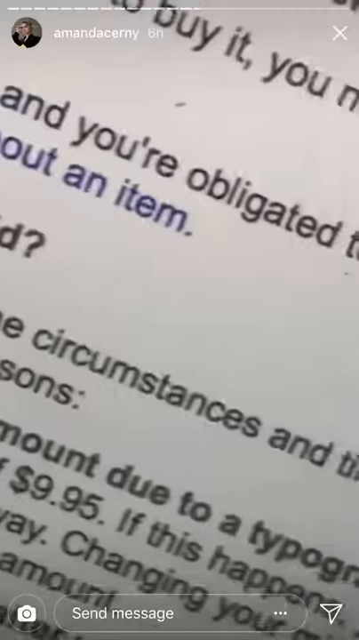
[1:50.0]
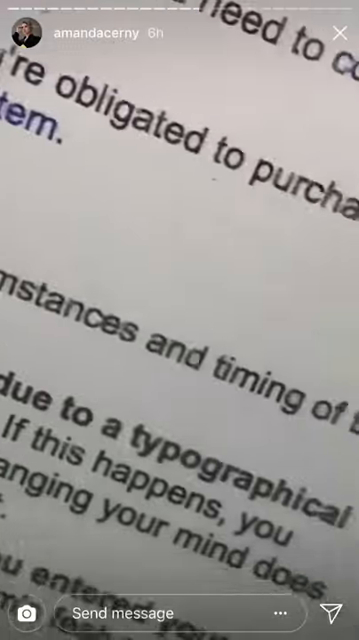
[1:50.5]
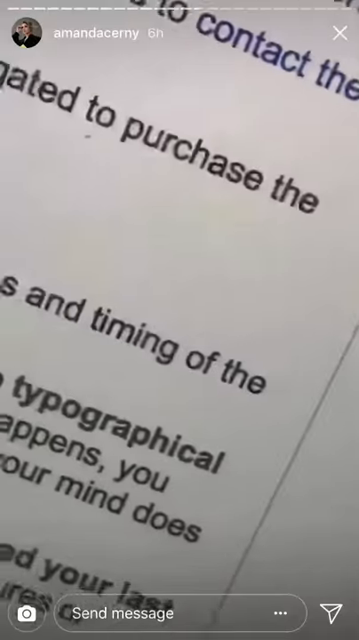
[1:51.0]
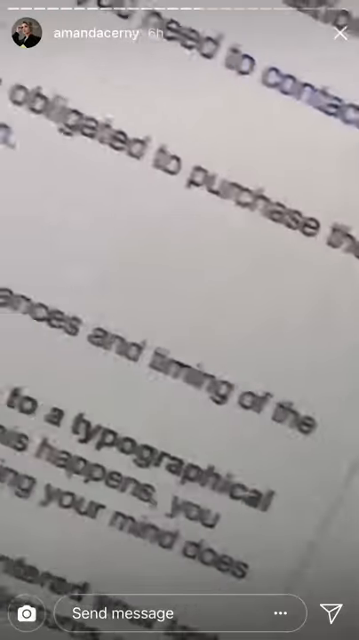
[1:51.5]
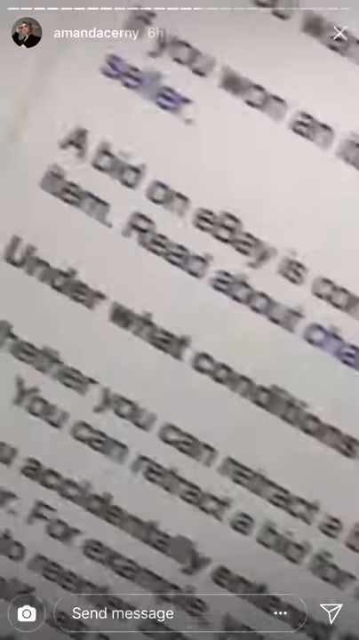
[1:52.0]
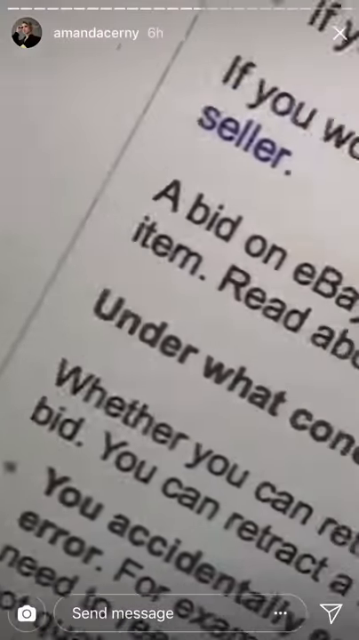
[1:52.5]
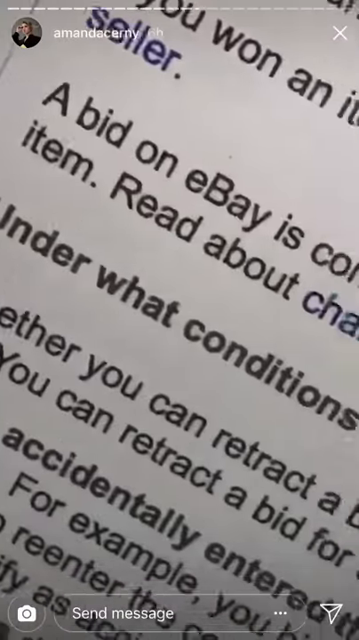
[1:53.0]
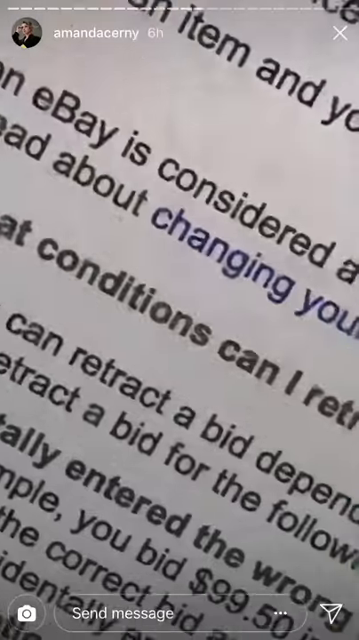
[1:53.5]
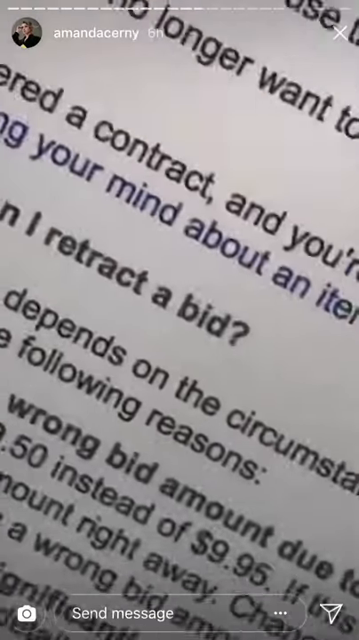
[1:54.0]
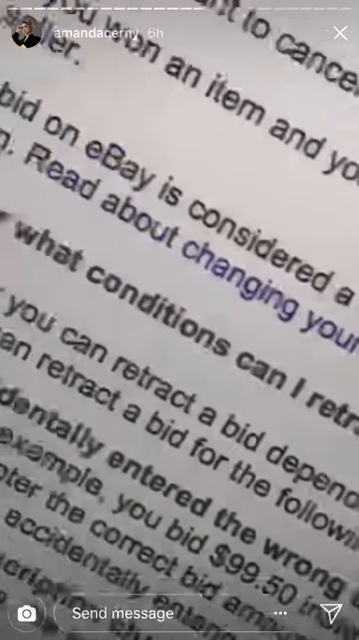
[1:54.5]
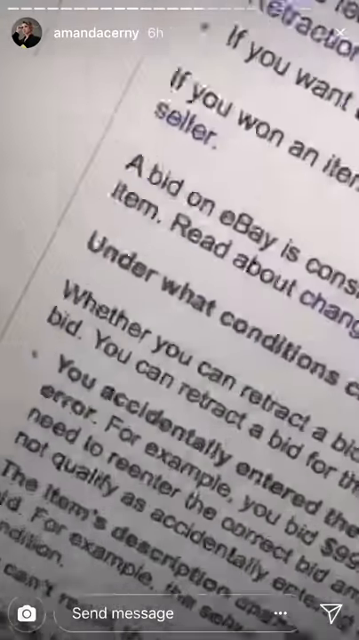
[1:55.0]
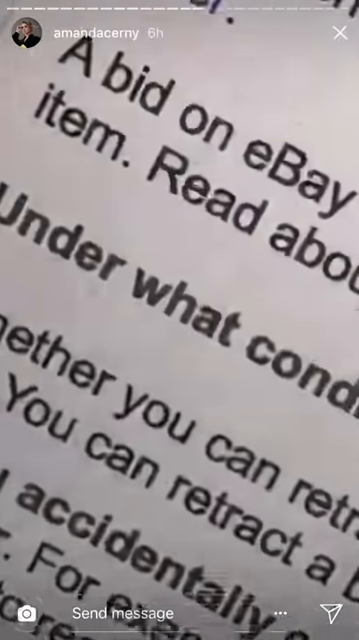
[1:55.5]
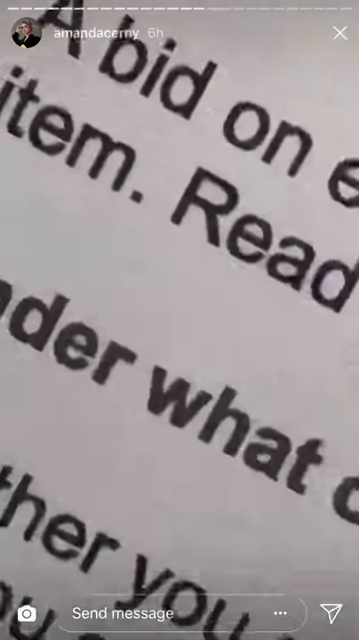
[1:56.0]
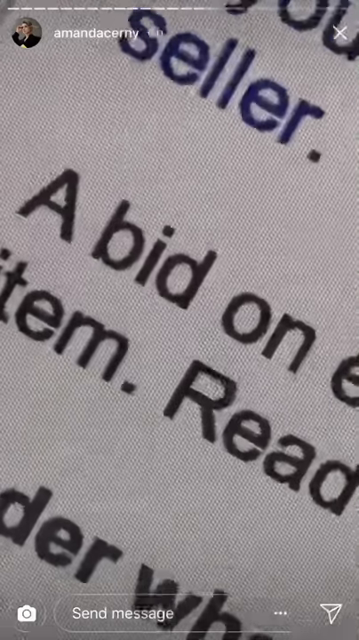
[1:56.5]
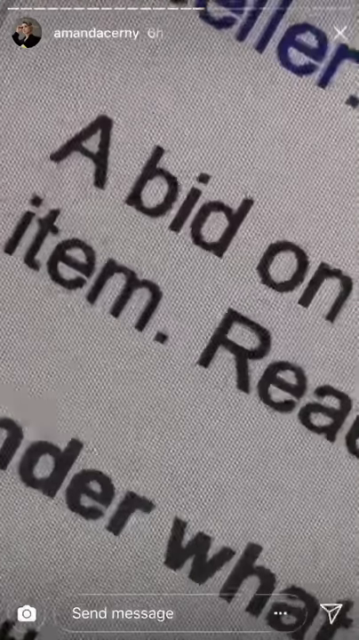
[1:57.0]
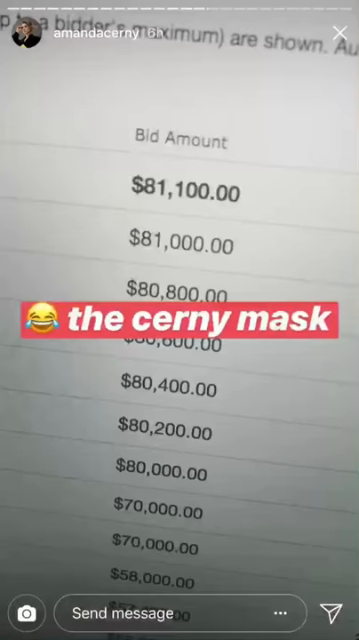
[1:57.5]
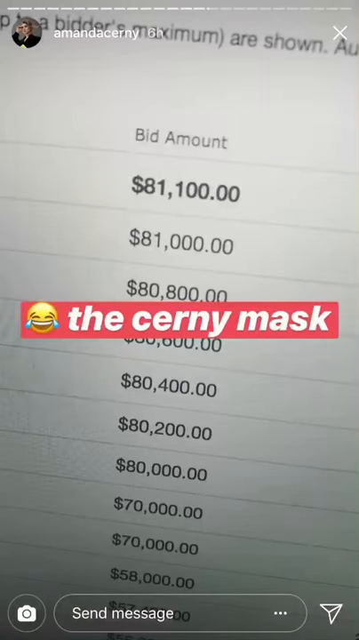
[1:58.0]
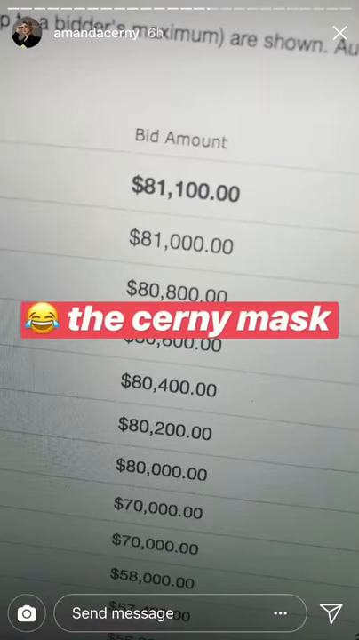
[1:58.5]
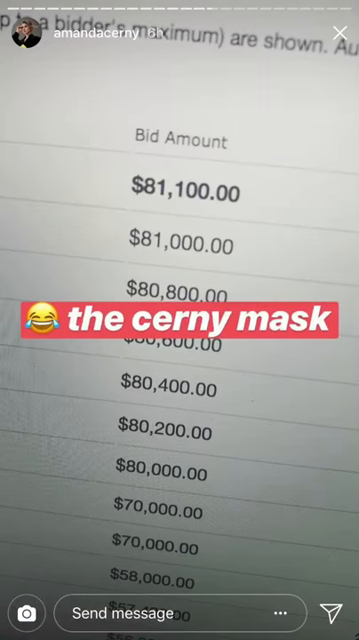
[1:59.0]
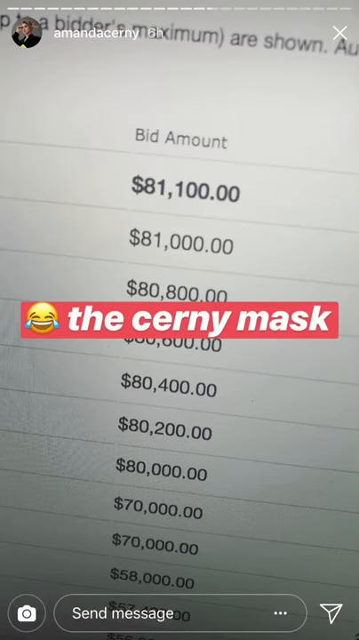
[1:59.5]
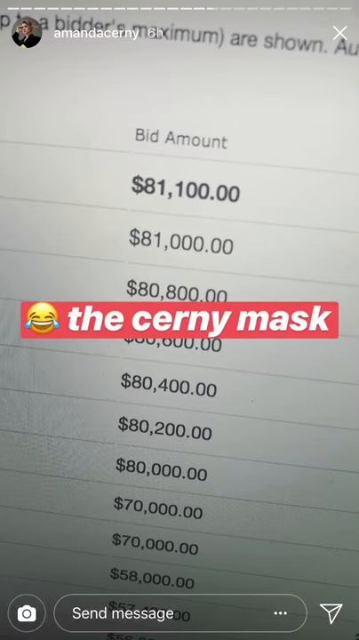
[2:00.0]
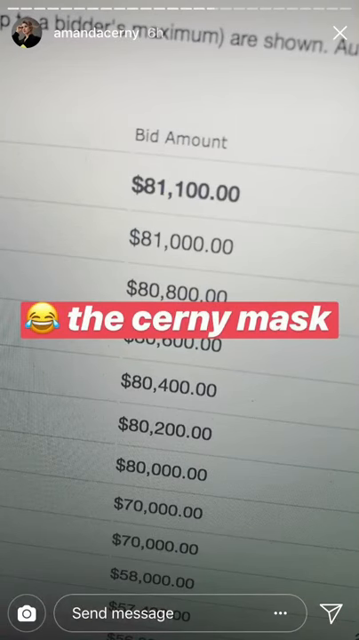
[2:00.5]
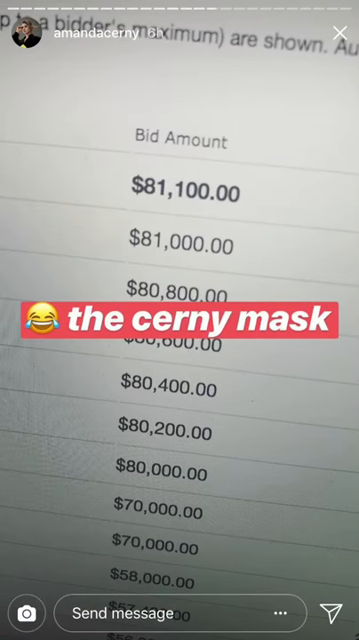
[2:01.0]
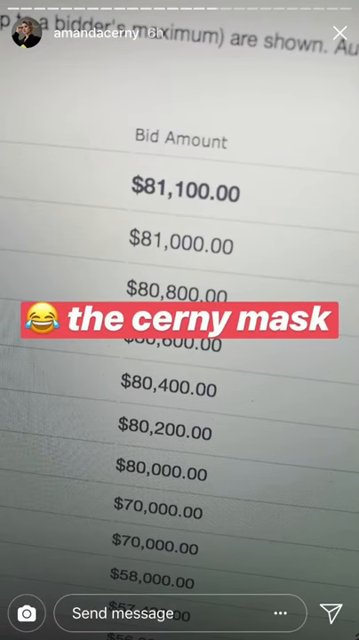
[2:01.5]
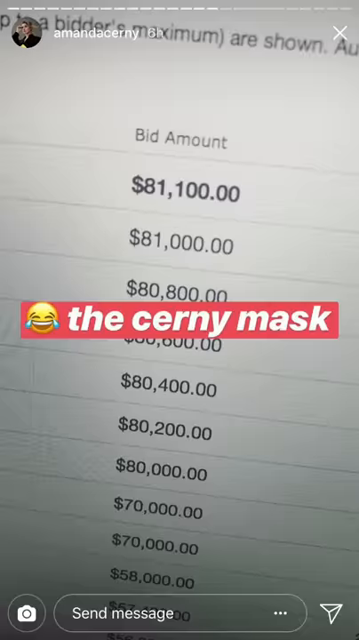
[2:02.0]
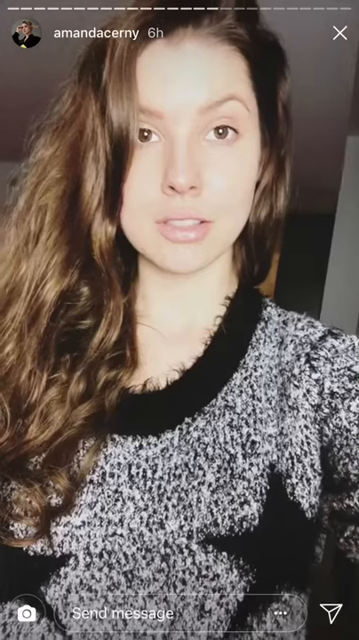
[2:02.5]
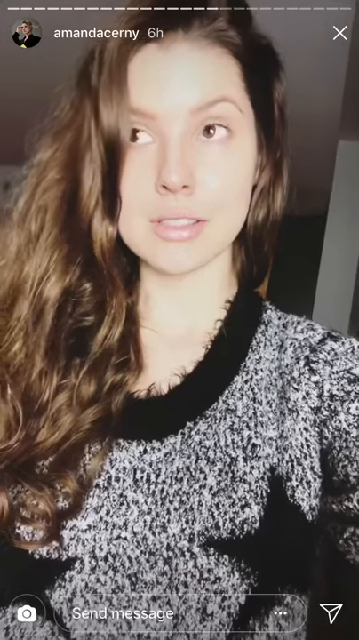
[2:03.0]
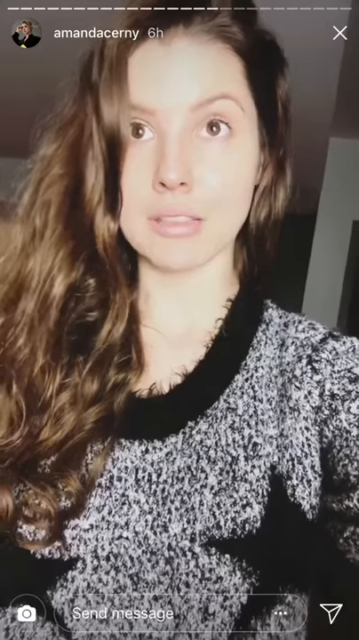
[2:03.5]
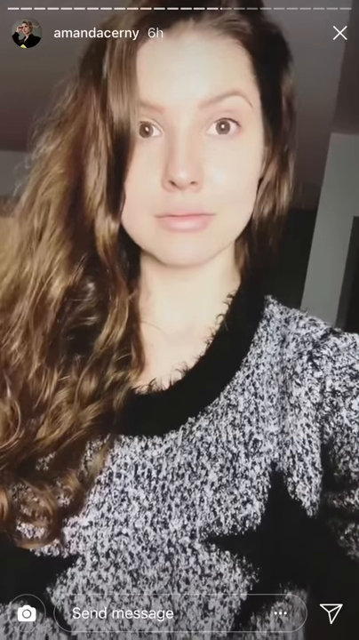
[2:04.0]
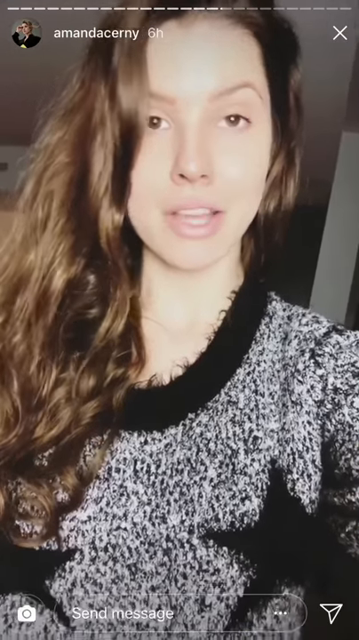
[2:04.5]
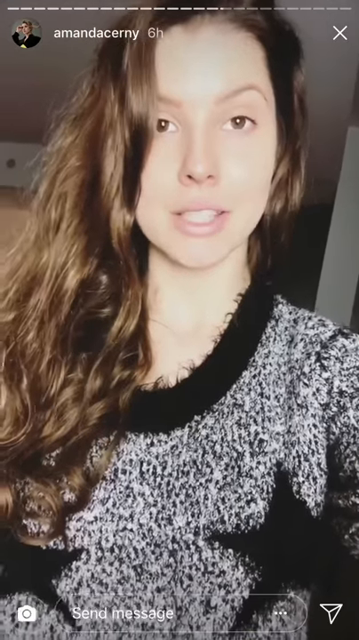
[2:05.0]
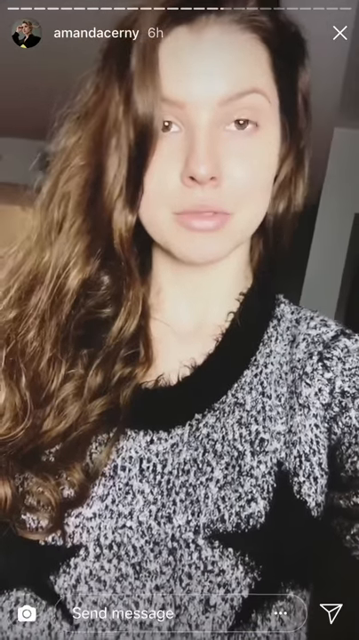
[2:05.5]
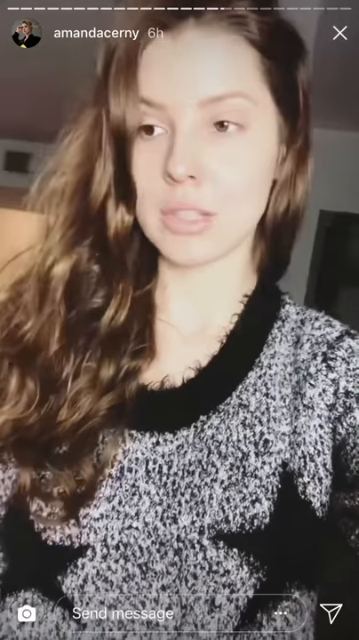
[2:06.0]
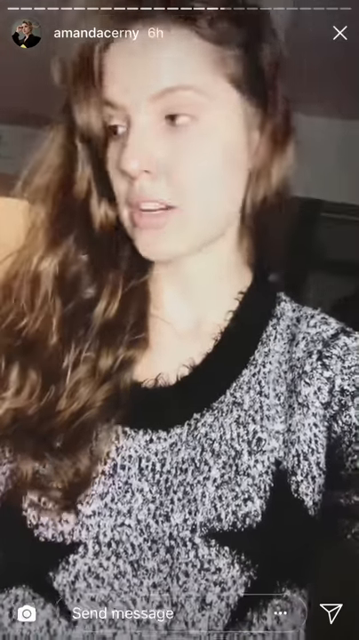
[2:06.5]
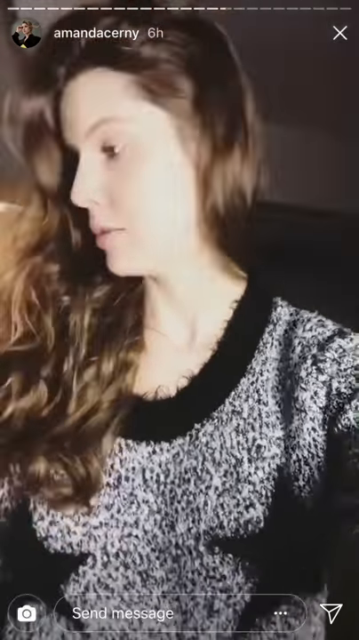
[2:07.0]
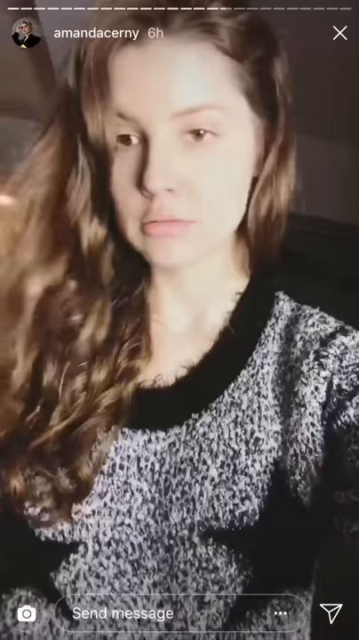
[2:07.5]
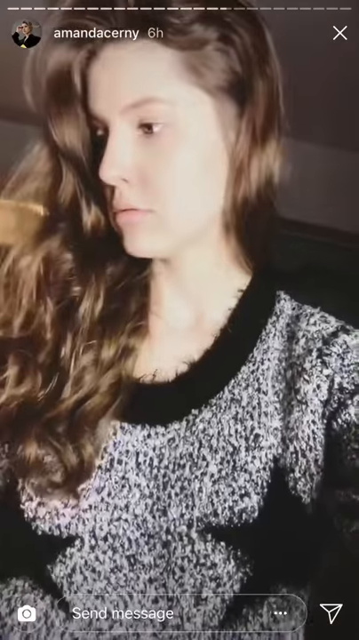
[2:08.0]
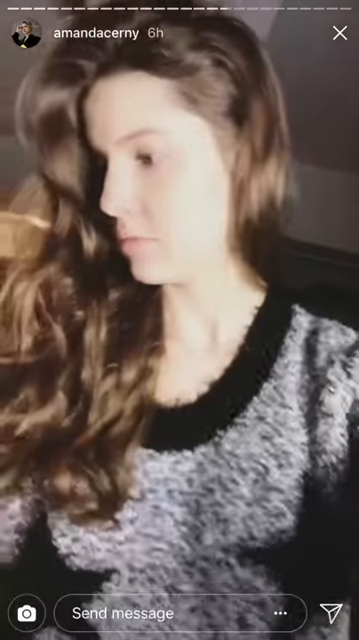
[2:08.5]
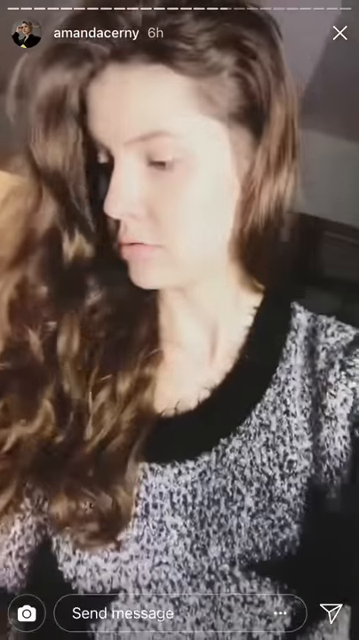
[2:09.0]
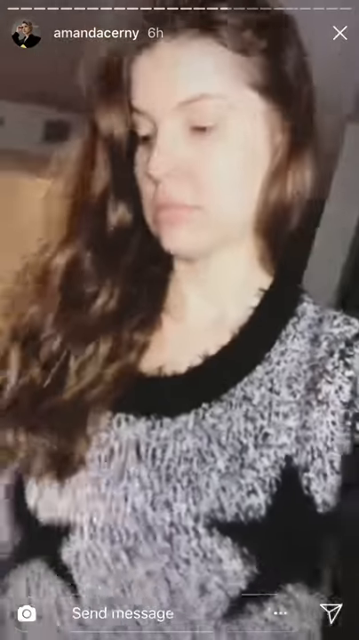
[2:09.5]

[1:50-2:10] An Instagram story shows terms and conditions on the eBay website, with readable text including "a bid on eBay is considered". The video then changes to show the highest bid so far at $81,100, with a laughing emoji and the text "the Cerny mask" written in white on a red background across the picture. Next is a woman with long brown hair worn all on one side, covering part of one eye while the other eye is exposed. She wears a black and white cardigan, looks into the camera as she speaks, and then looks sideways away.